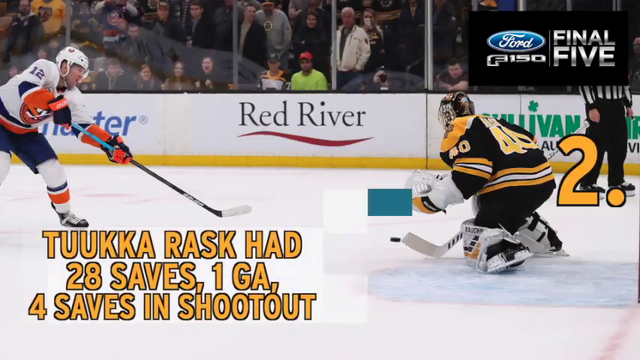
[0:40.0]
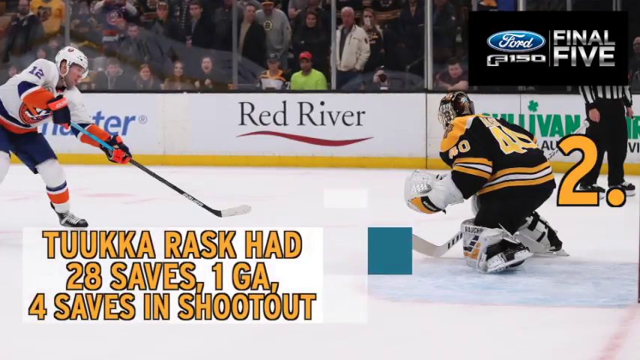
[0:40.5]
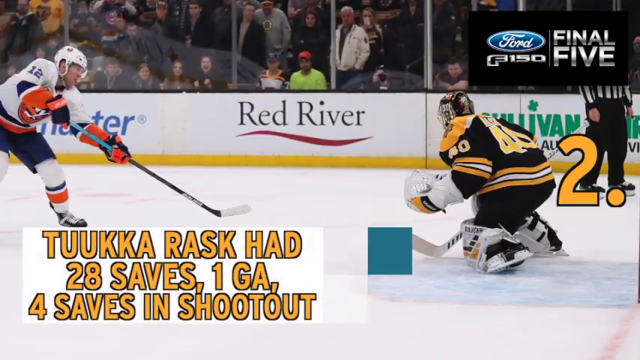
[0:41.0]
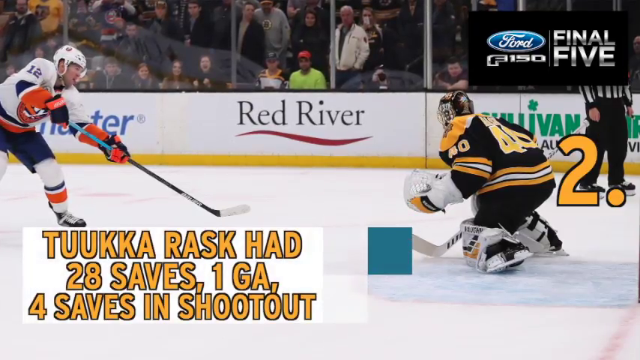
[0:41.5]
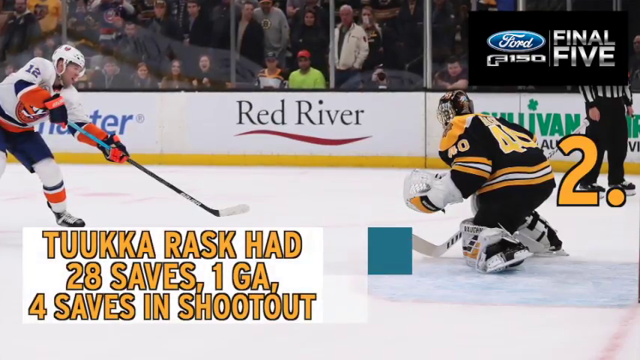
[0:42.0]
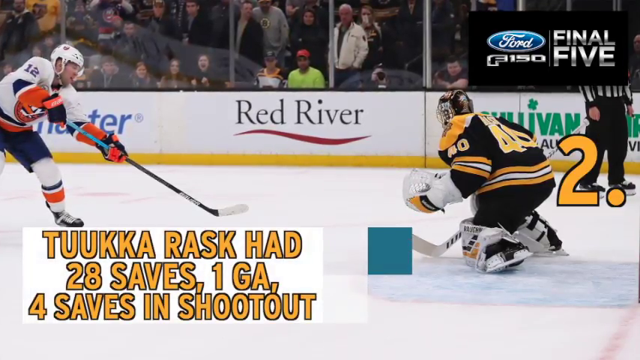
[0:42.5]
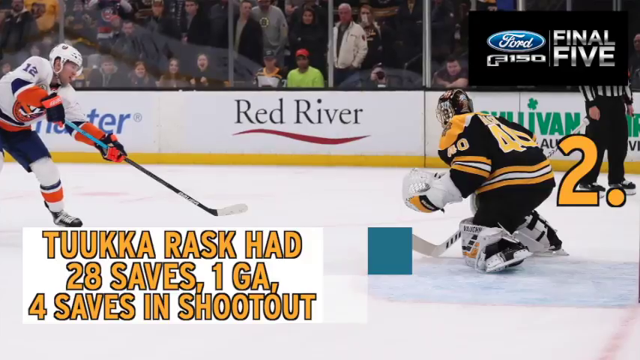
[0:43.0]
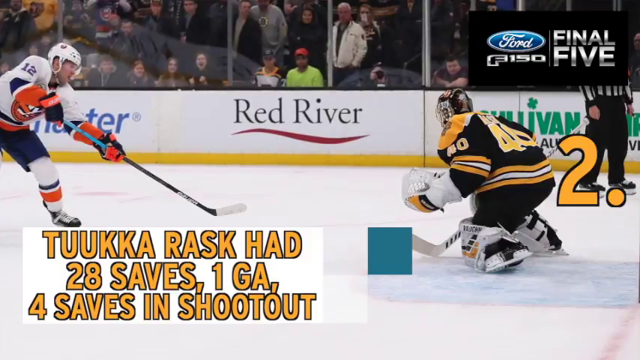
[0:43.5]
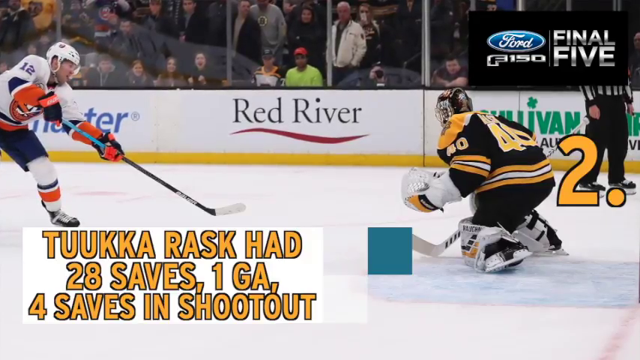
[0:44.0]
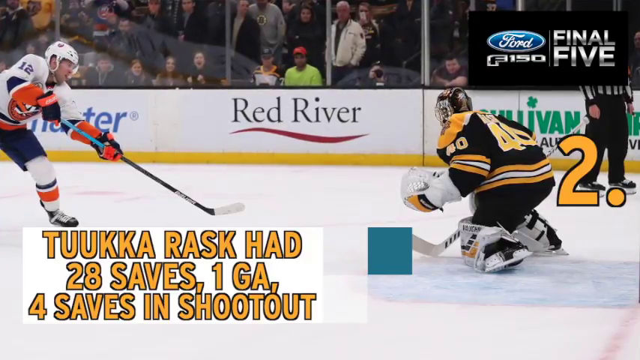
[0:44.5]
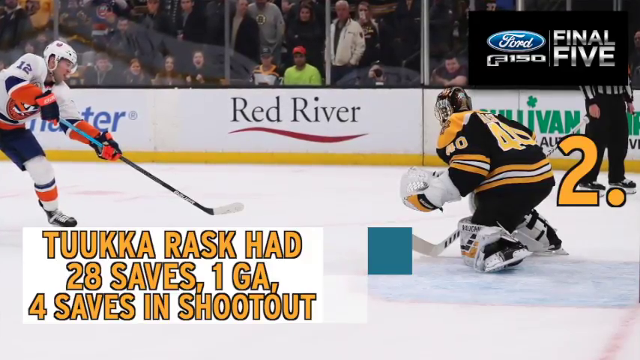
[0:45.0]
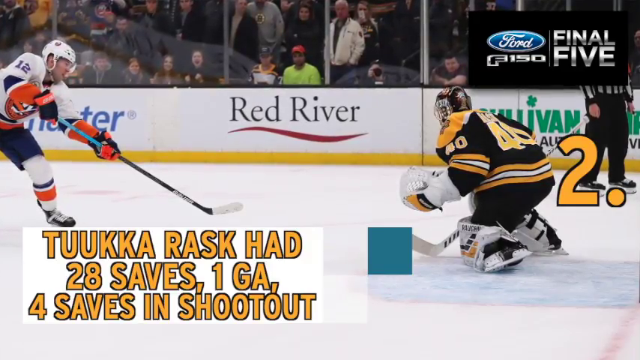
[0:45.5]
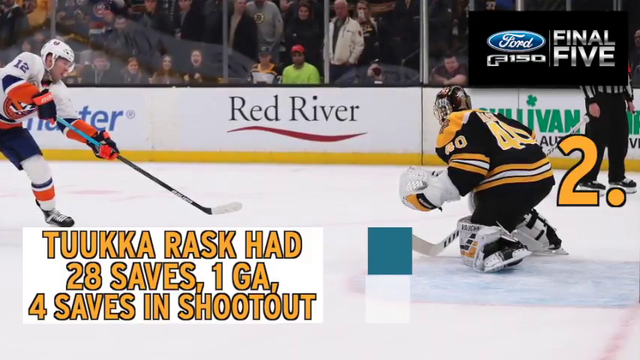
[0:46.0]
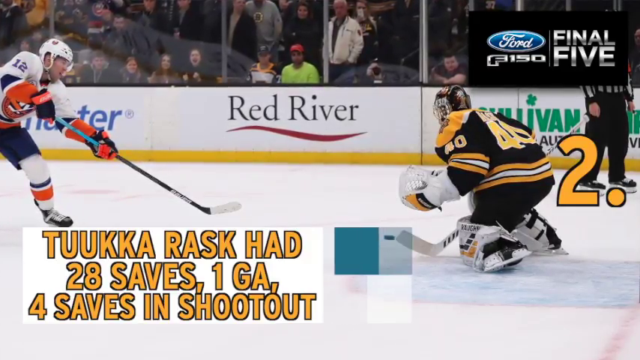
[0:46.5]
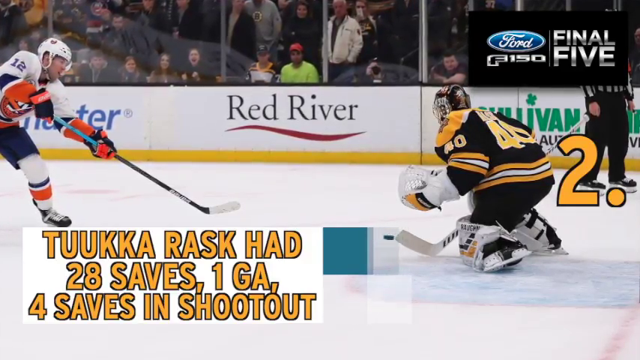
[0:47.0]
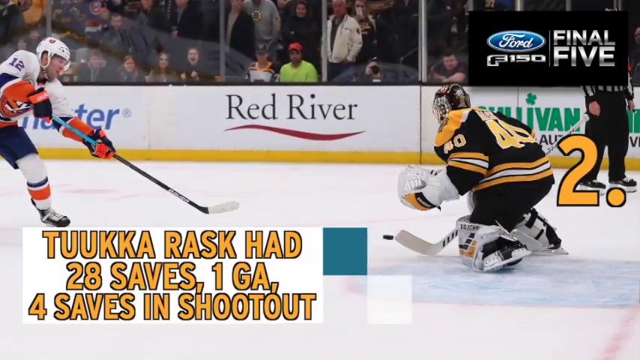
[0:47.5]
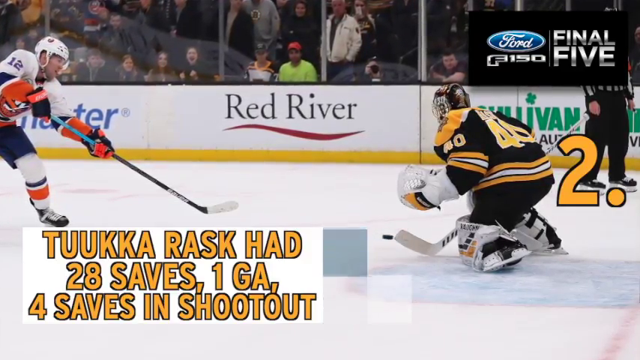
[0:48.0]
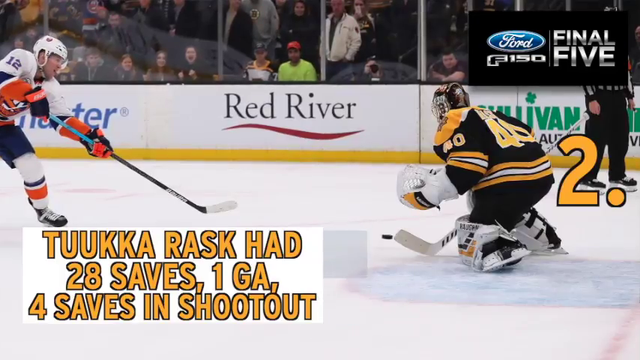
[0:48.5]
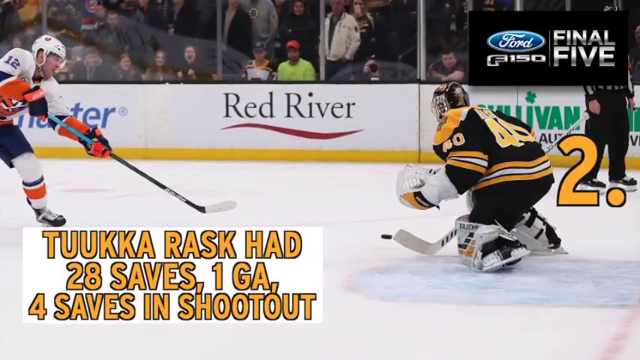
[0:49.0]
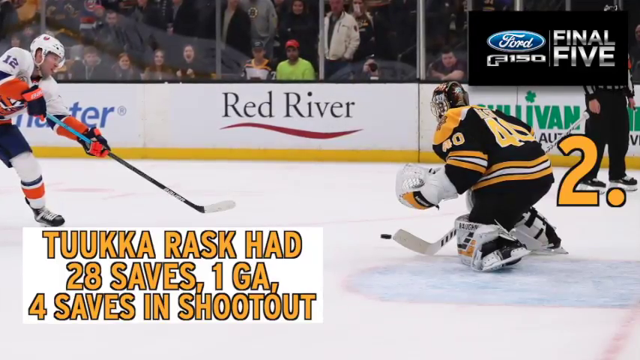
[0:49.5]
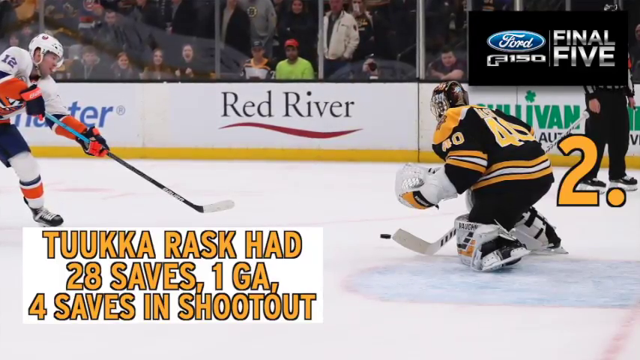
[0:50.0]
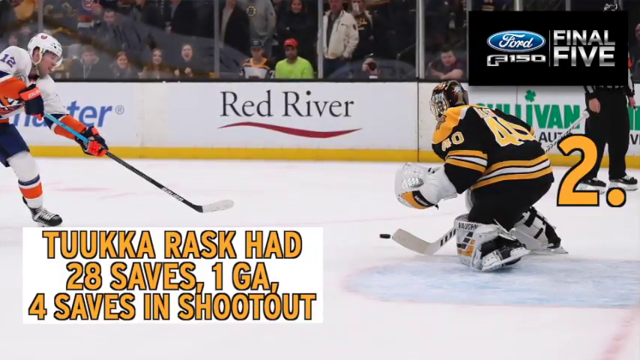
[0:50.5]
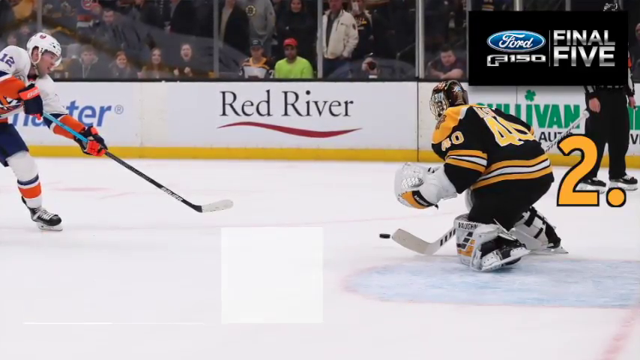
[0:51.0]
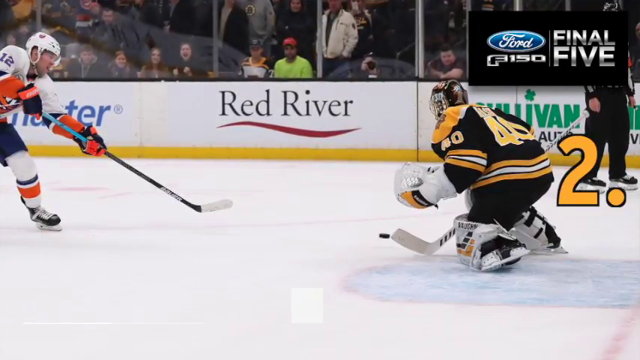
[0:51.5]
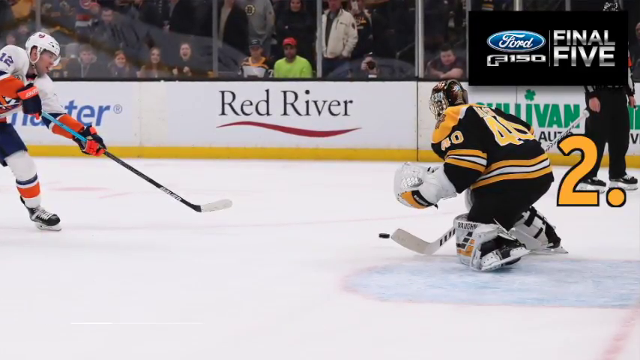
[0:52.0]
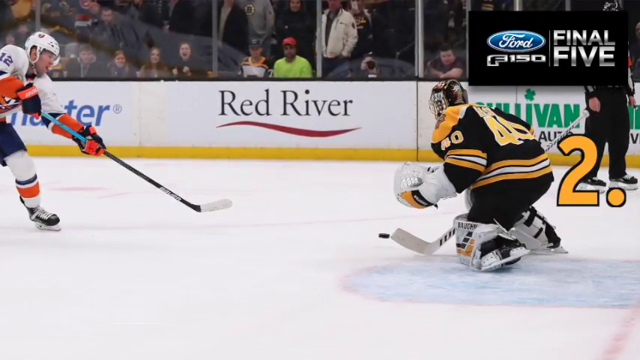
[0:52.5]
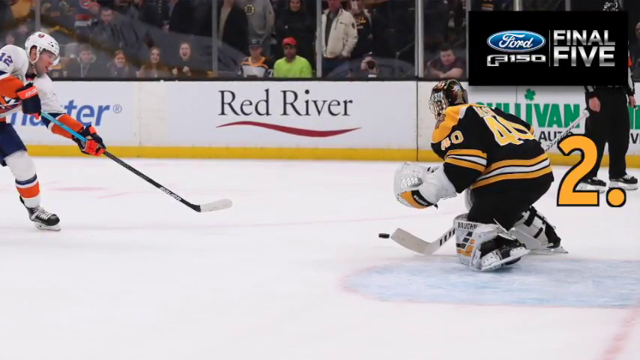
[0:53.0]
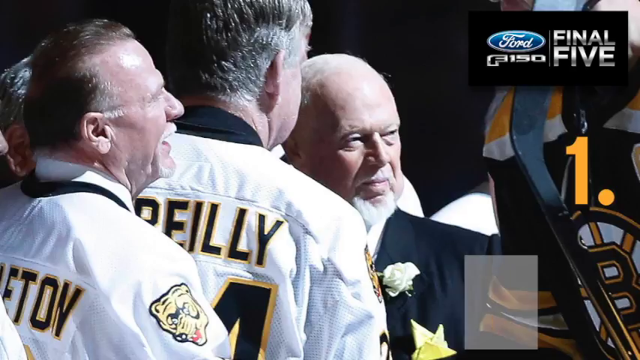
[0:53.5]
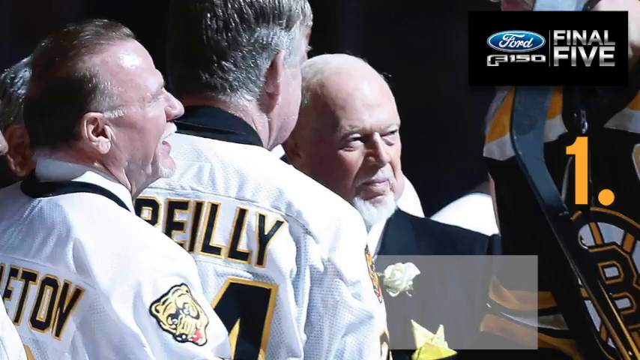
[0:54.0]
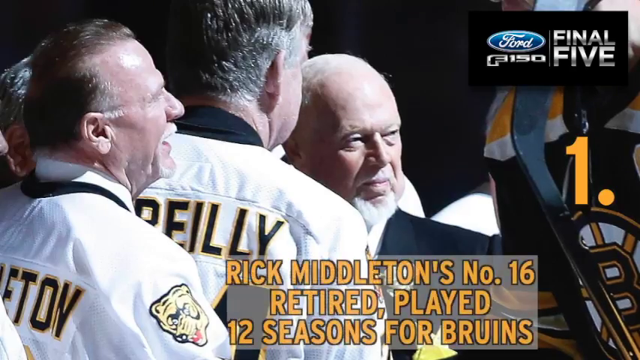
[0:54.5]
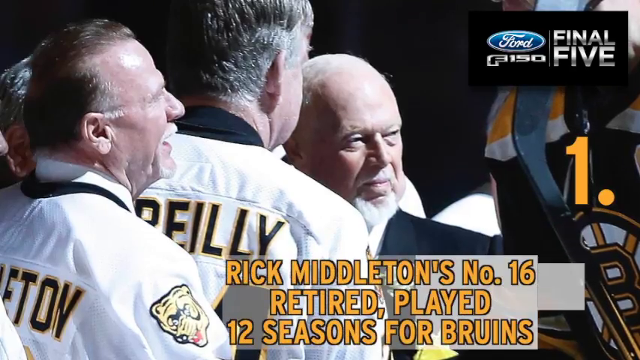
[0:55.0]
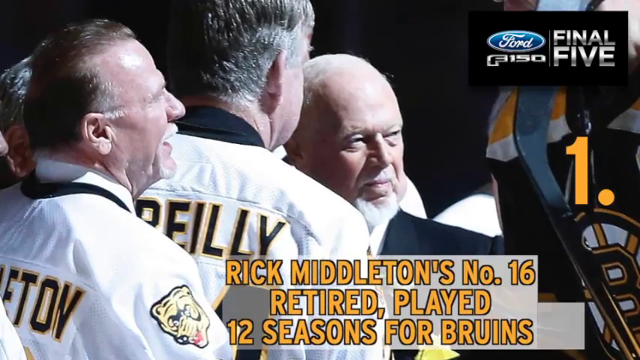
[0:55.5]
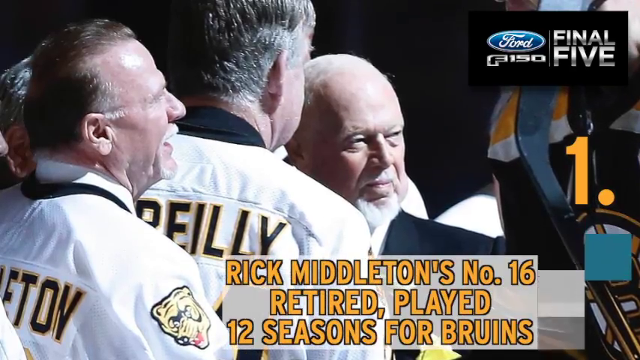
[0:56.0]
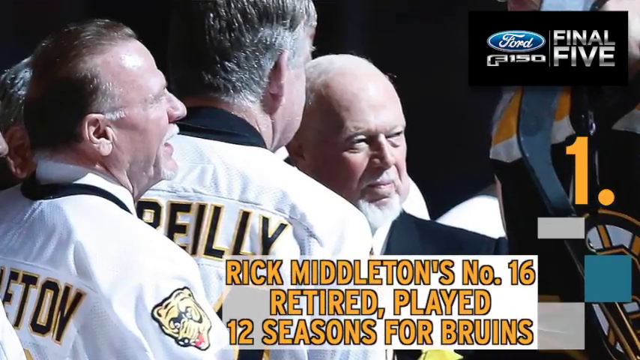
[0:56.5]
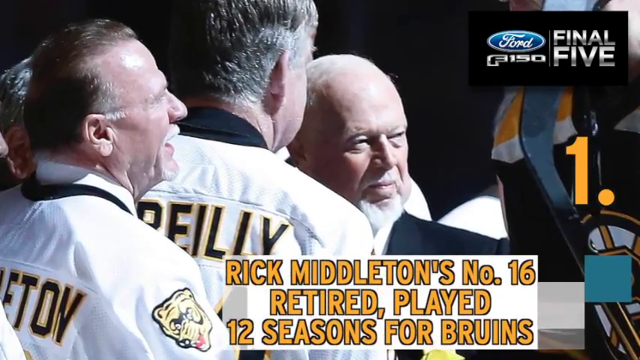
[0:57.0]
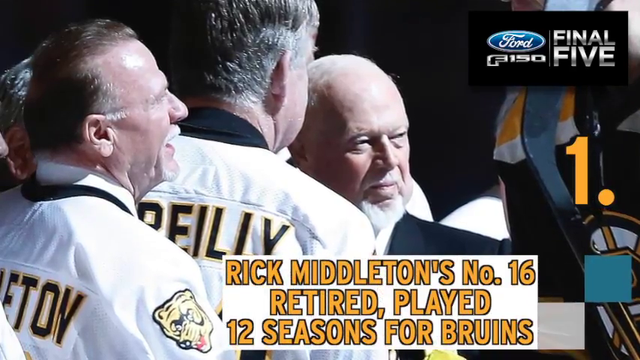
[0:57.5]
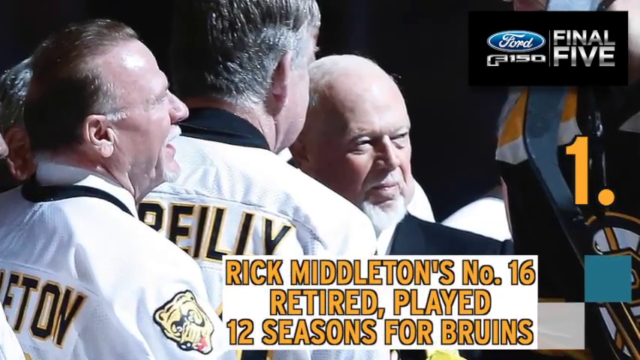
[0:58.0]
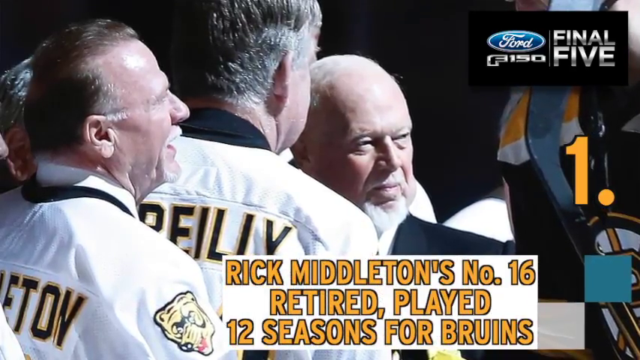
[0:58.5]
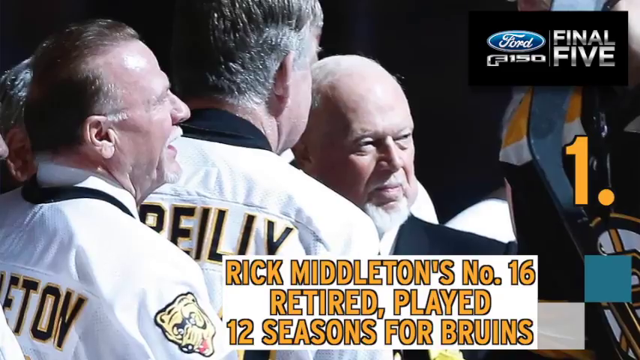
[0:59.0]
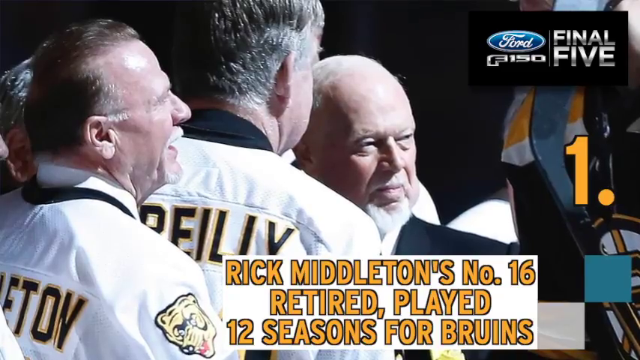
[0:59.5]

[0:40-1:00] Text at the bottom left reads "28 saves one goal against and four saves in a shootout," and a number 2 in yellow or goldish font is on the right-hand side. A player shoots on goal and goalie Rask makes a save. Logos are in the rink behind them; one apparently says Ticketmaster. A ref is in the top right of the screen, and "Ford F-150 final five" appears on a black background. Fans are in the stands. The view zooms into the picture, the text on the left fades away, and only the picture remains. Another picture pops up with more text: "Rick Middleton's number 16 retired. He played 16 seasons with the Bruins." Older Bruins players in white jerseys are shown, in what looks like a jersey retirement at that game.